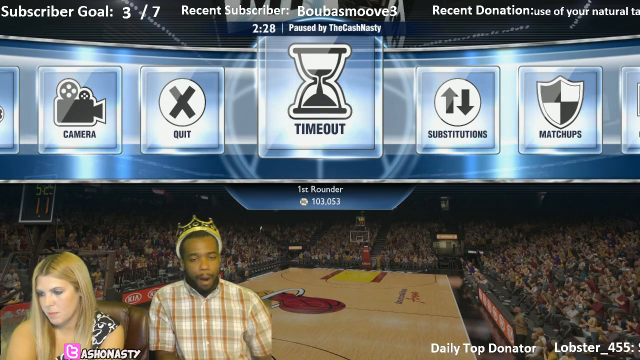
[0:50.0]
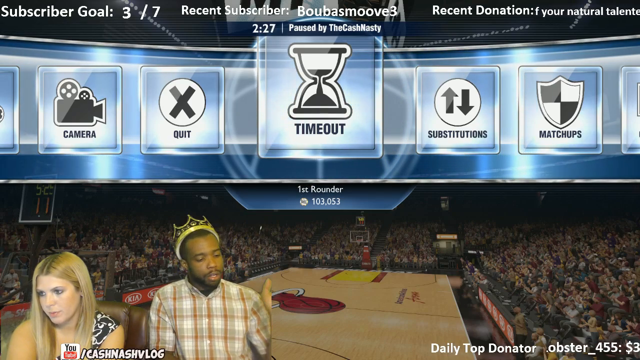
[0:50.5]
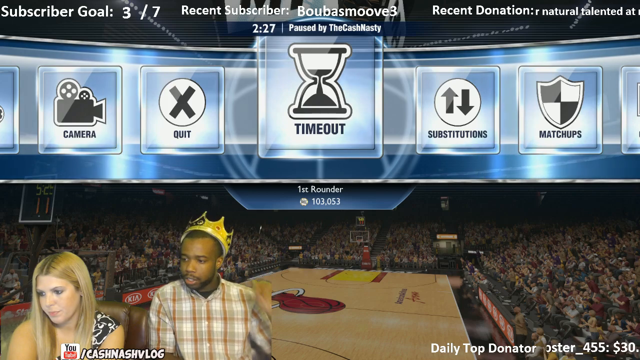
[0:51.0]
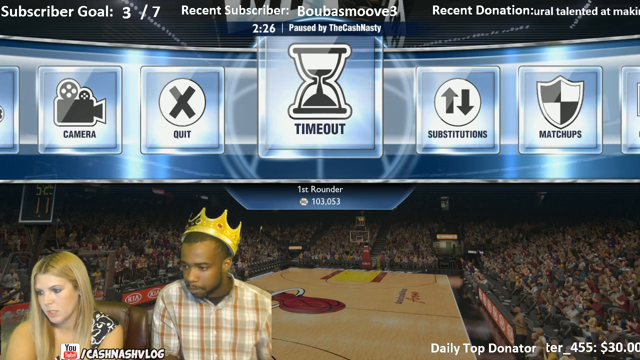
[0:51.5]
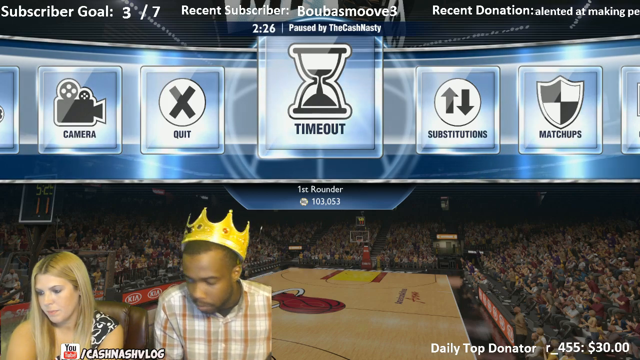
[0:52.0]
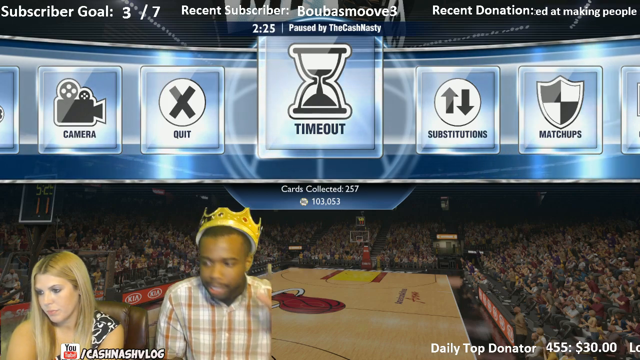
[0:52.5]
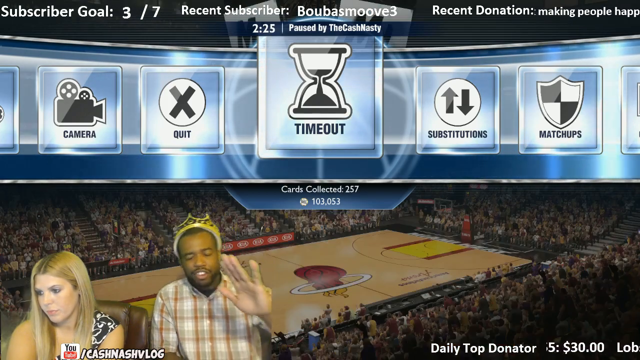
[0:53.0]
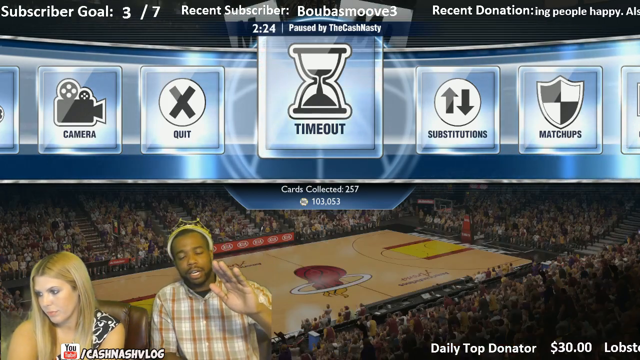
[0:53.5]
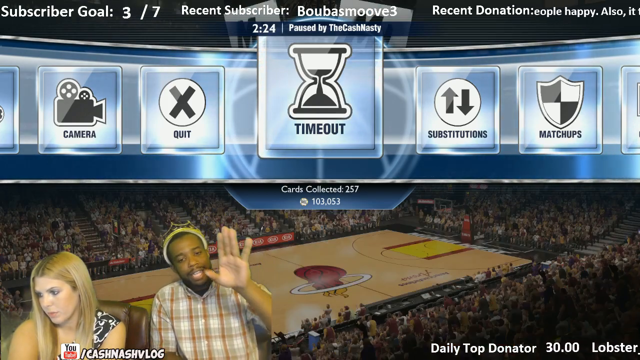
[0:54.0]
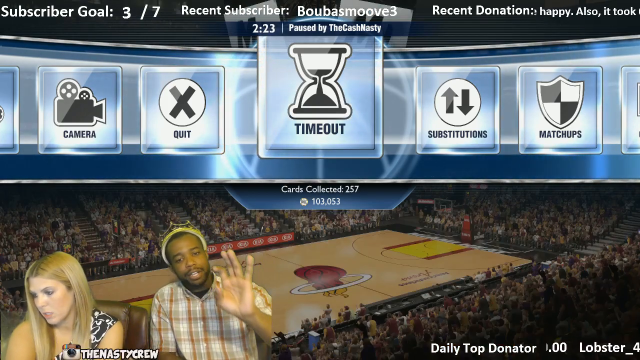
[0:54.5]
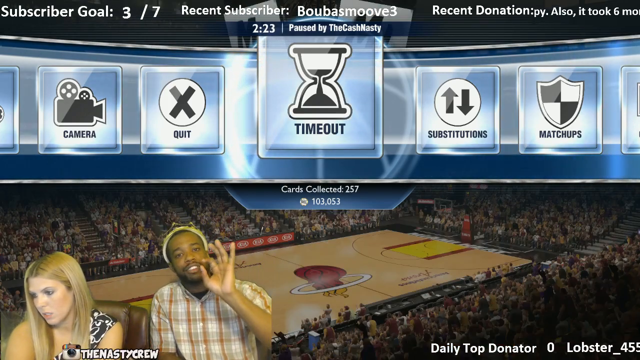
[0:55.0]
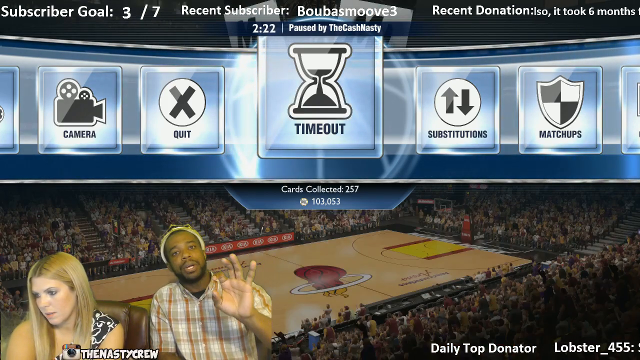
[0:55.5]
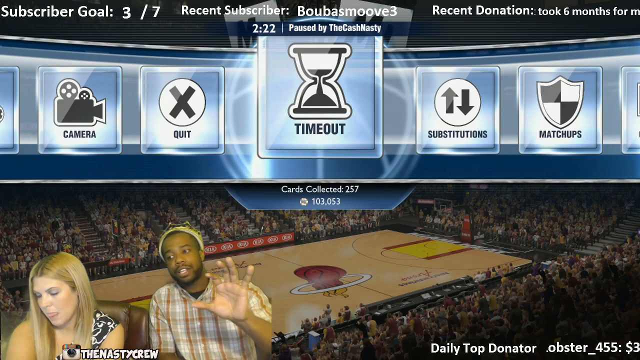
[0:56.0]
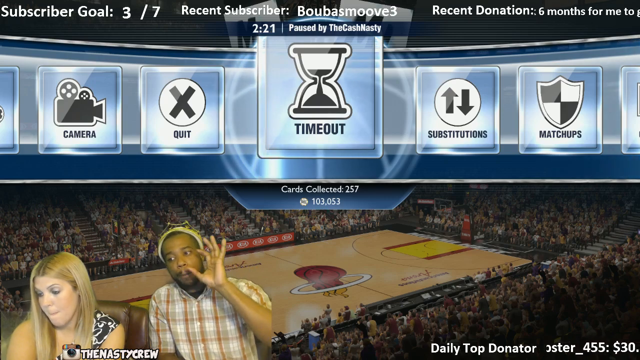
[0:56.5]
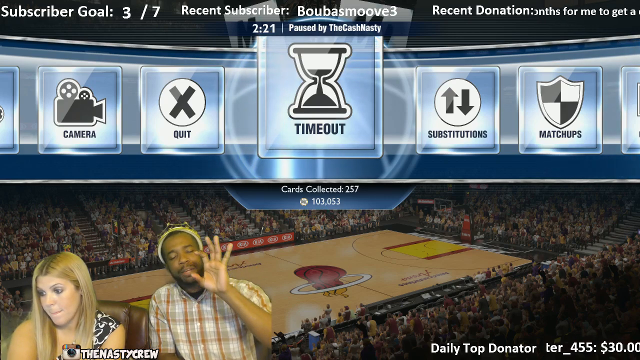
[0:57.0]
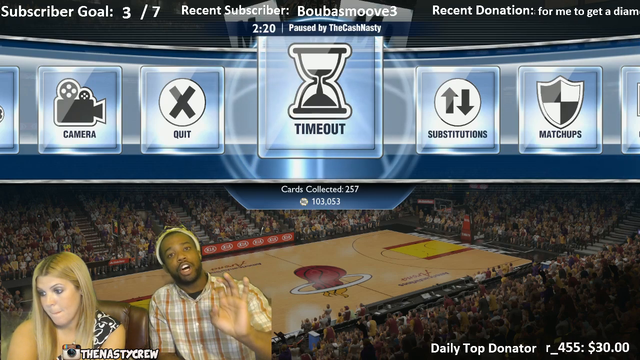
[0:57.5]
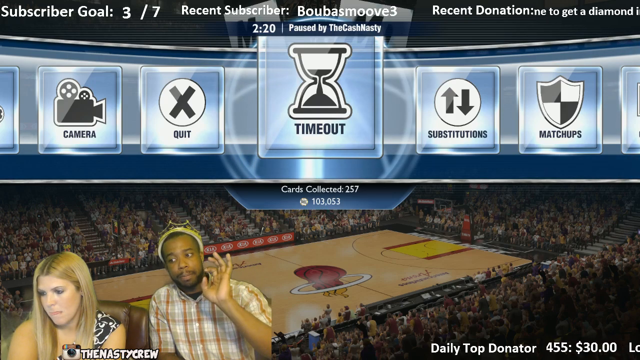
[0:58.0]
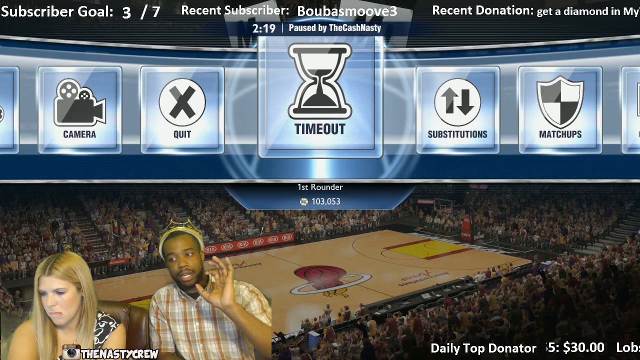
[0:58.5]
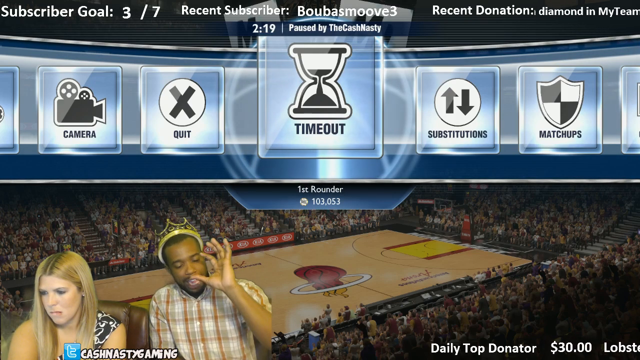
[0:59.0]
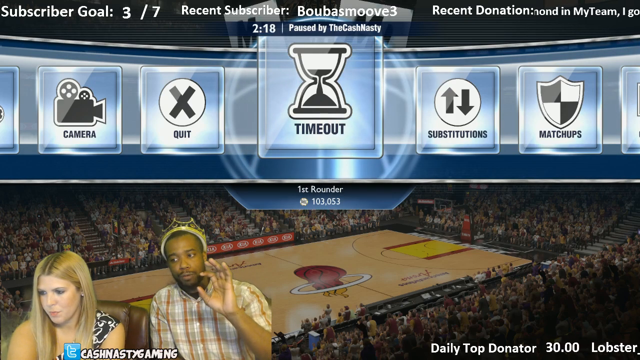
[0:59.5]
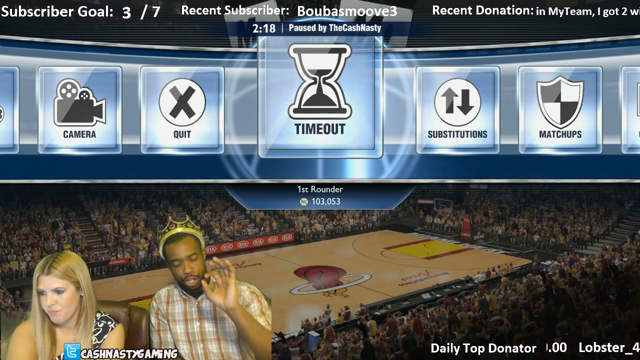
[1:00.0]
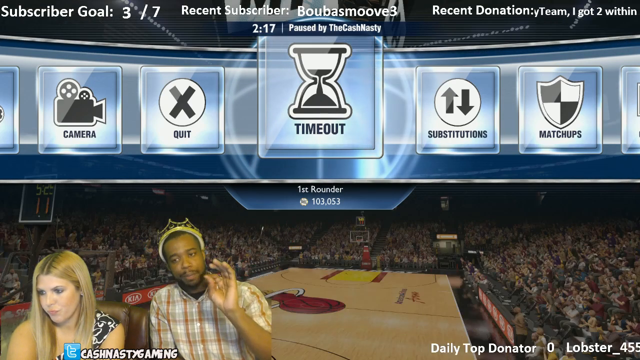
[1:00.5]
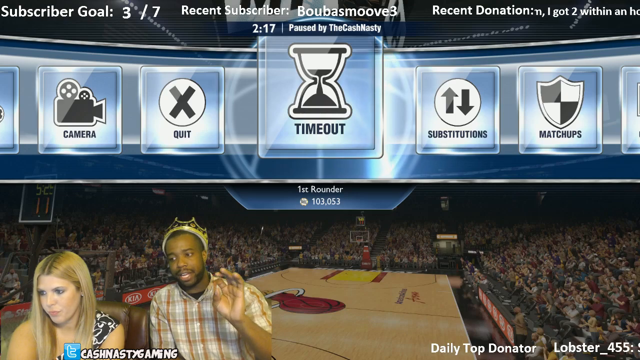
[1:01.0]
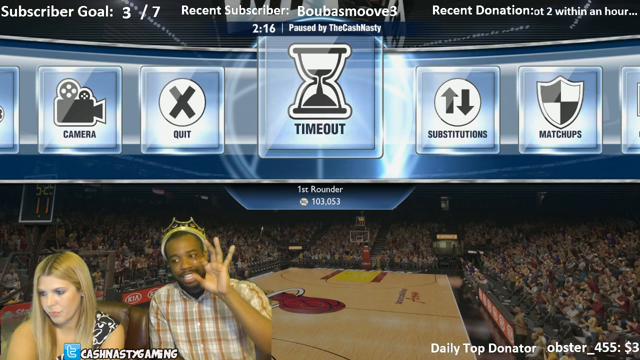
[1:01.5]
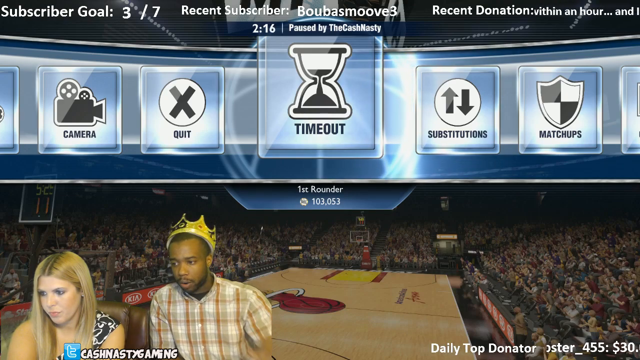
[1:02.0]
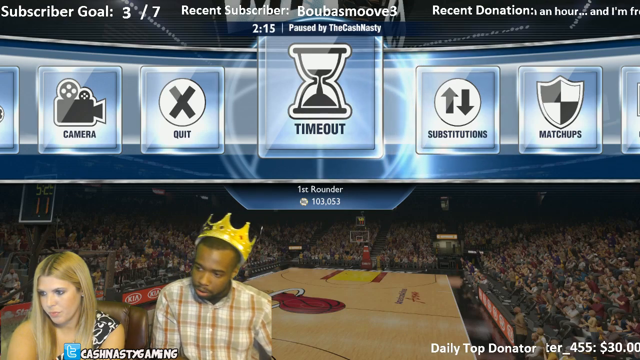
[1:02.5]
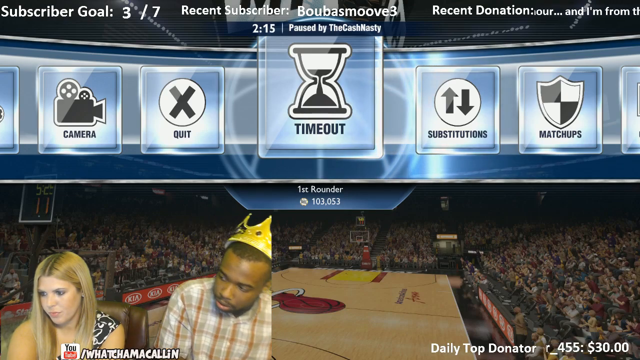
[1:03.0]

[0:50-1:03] The game is still paused. The man talks, using his left hand to gesture and show how he feels. He looks down to his right at the screen, then raises his left hand while talking, visibly upset, pointing out things about the game. The woman still looks to her right side, listening and not talking as much as he is. A donation icon is on the right side, with words moving from right to left, something about "naturally talented at making people happy," which the man is looking at.